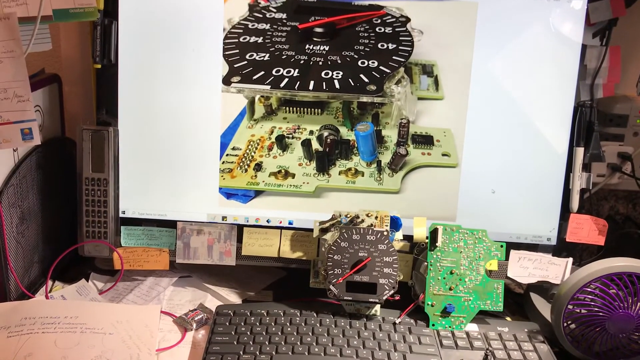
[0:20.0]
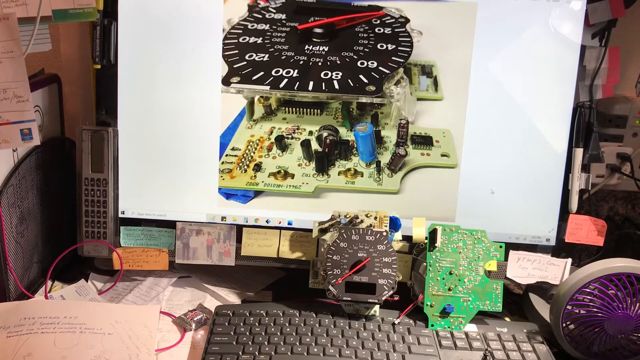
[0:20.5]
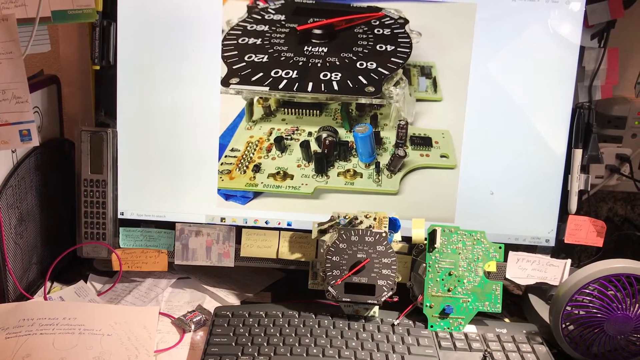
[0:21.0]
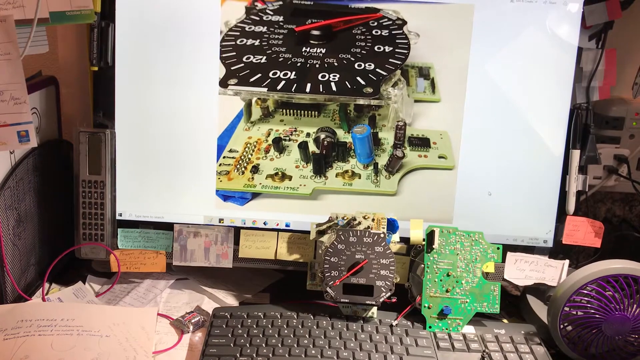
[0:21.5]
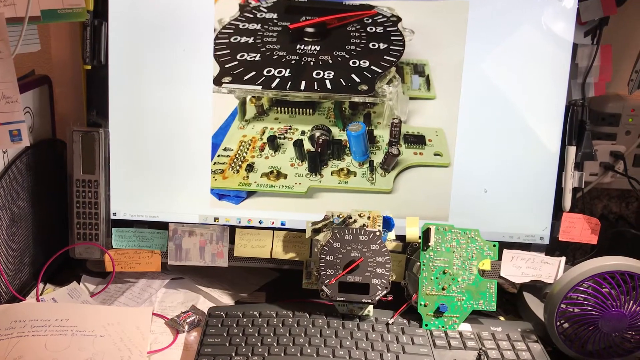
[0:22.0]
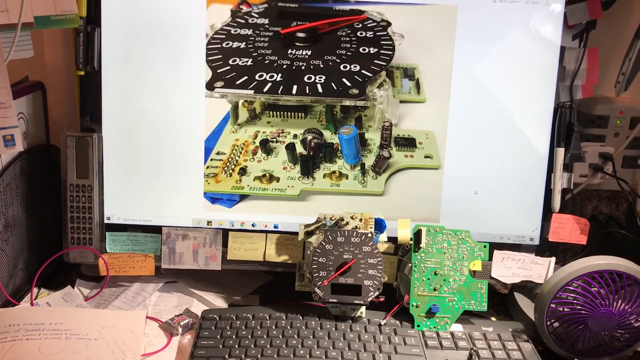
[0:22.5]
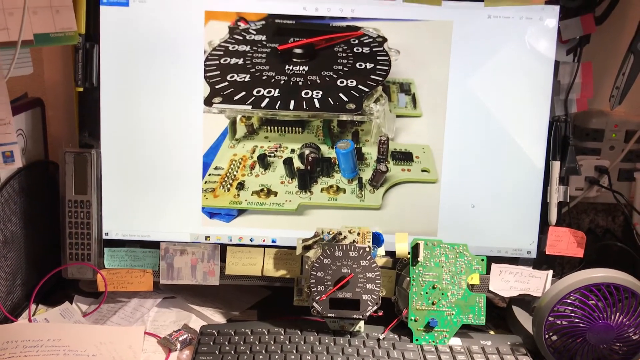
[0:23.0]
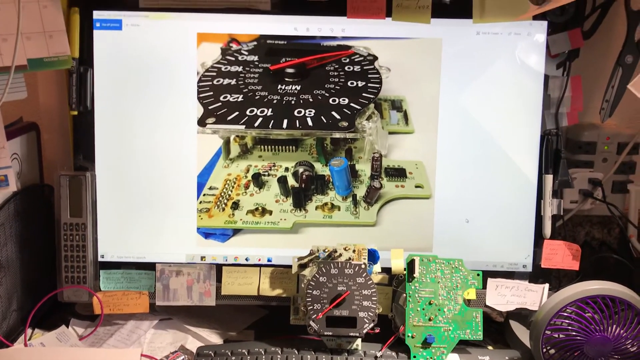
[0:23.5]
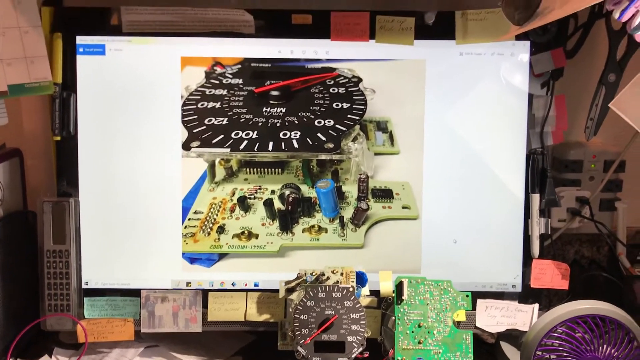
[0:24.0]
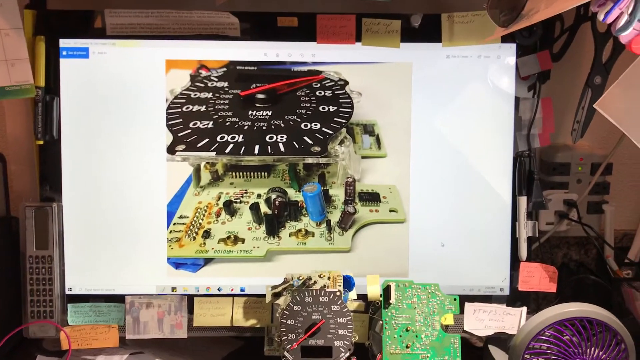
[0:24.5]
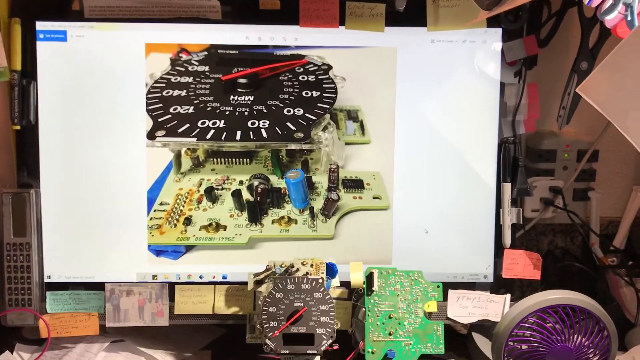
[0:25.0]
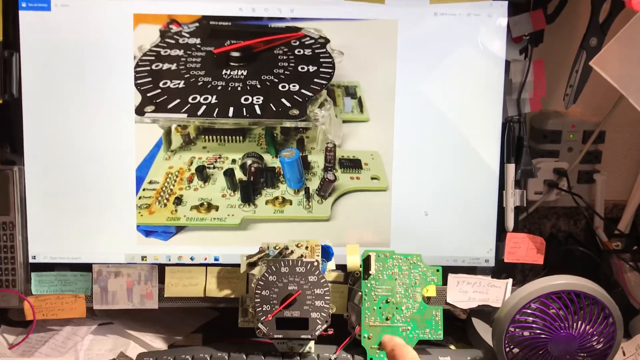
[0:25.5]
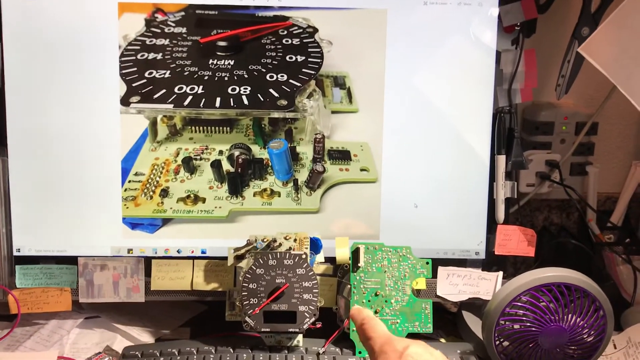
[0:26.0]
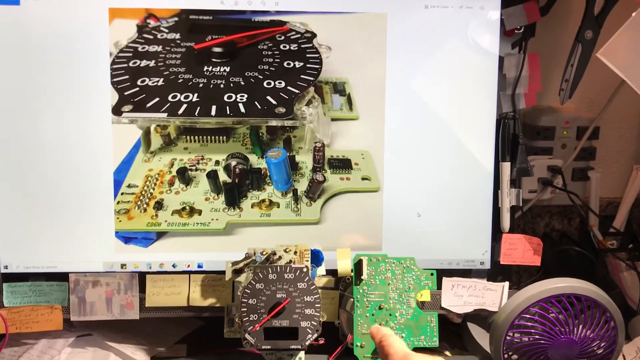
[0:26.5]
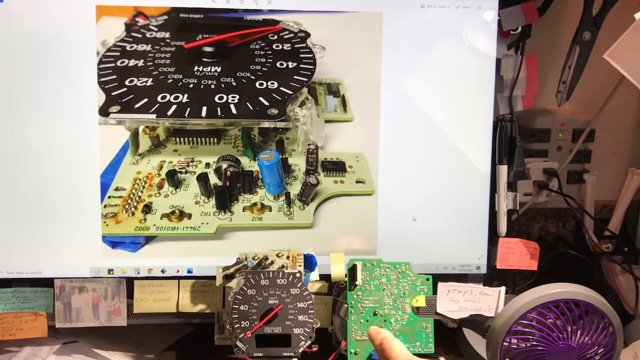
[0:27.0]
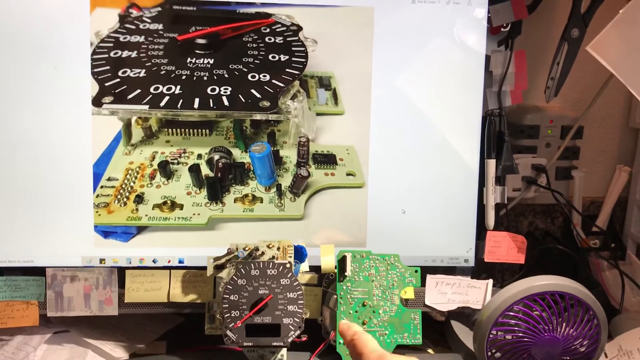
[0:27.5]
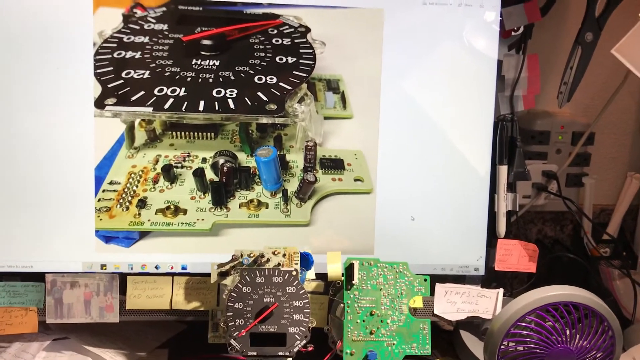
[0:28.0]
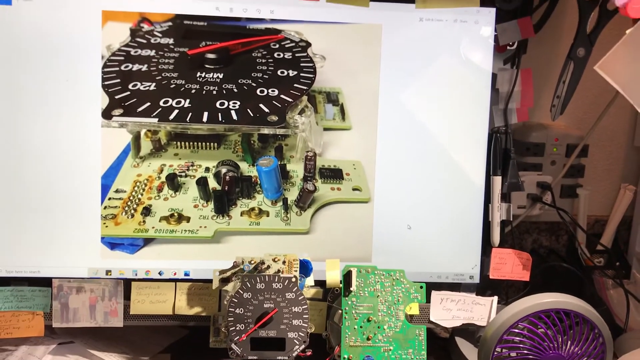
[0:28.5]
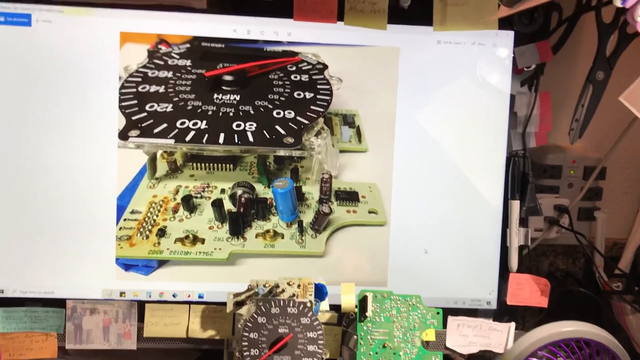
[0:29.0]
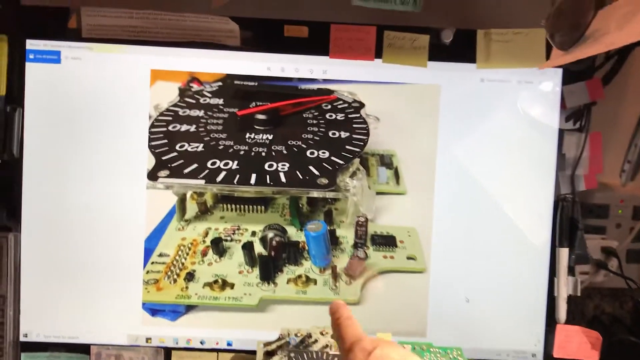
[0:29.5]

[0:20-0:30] A closer view shows the very large monitor with the picture of the speedometer, which is laying on its side. Someone's finger points to a blue thing on the CPU of the speedometer. Below the monitor is the actual speedometer and its CPU, and beside it is something that looks like the back of a separate monitor or the back of the speedometer. The office has paper everywhere: post-it notes are all over the monitor and papers are all over the desk. There is a wire, and something is laying there that might be a phone, though it has too many number pads and remains unidentified. The fan with purple on it is still there.